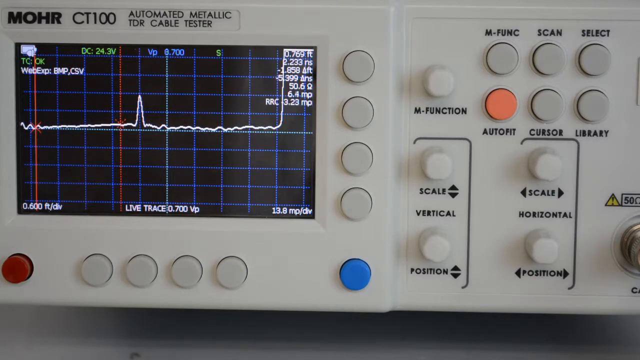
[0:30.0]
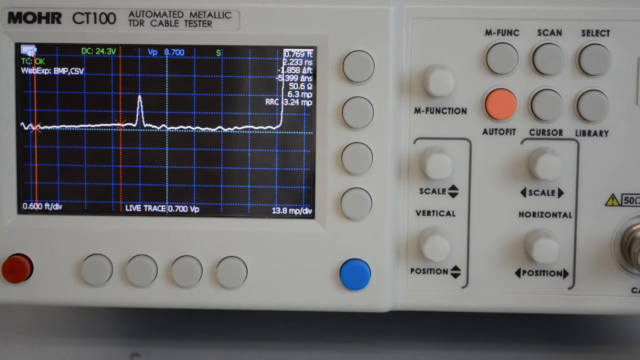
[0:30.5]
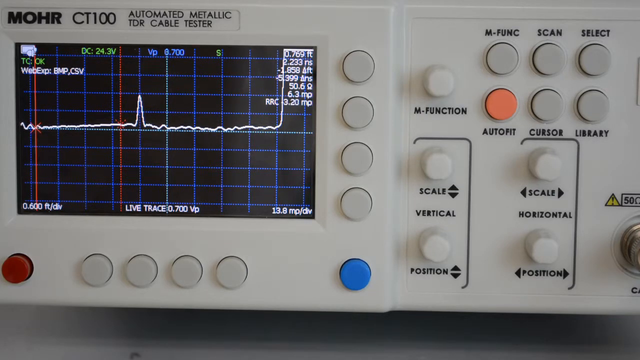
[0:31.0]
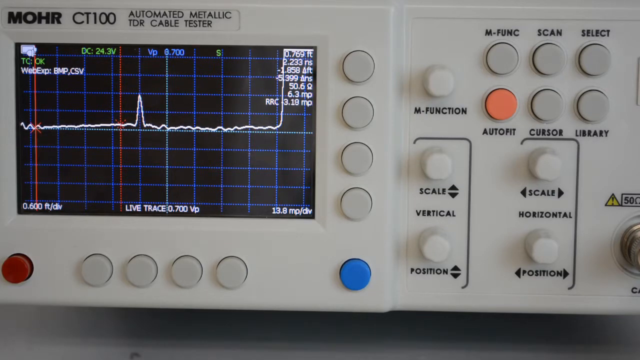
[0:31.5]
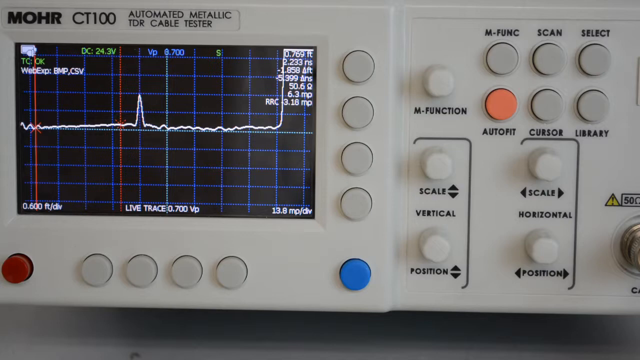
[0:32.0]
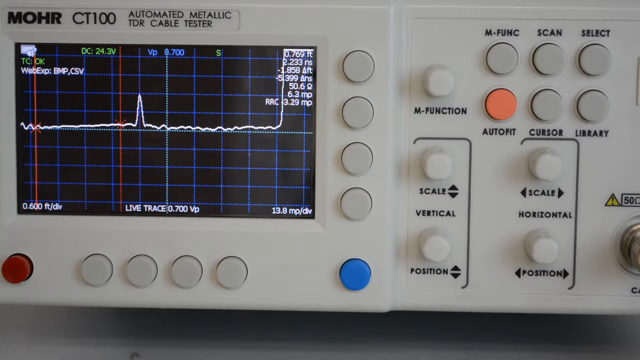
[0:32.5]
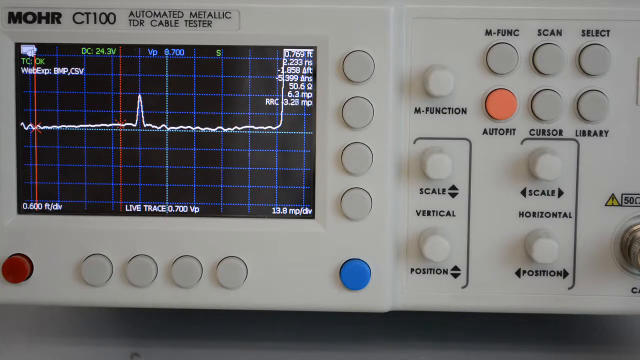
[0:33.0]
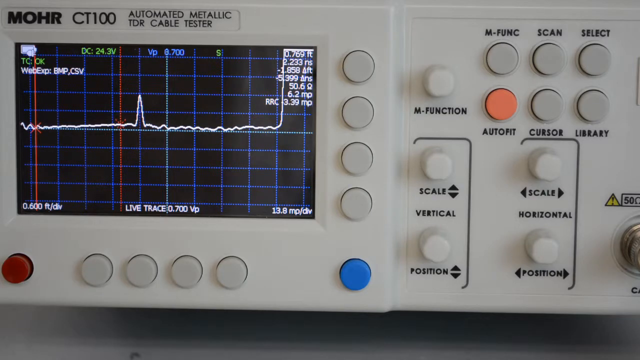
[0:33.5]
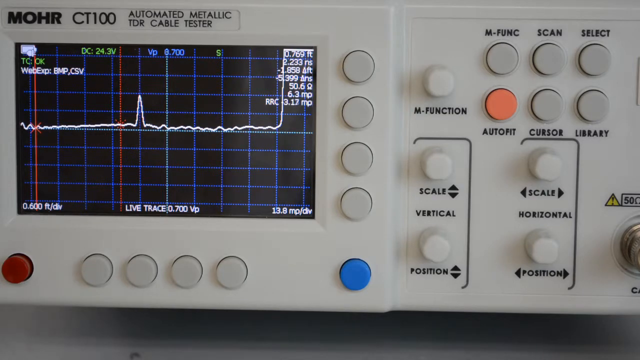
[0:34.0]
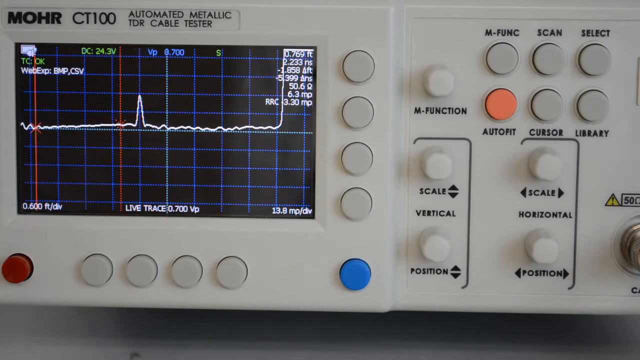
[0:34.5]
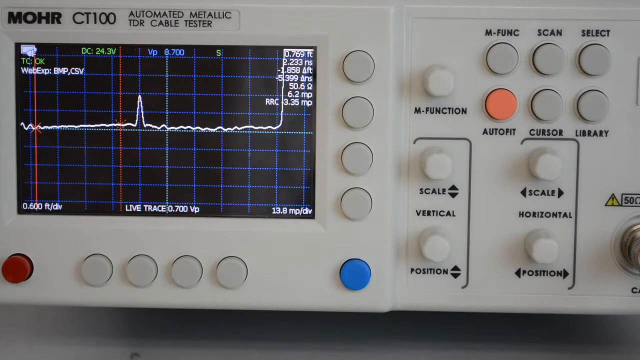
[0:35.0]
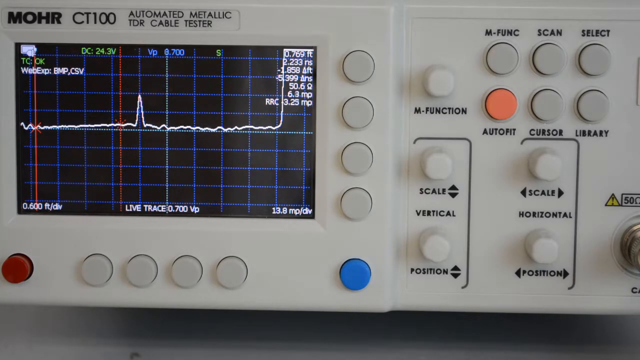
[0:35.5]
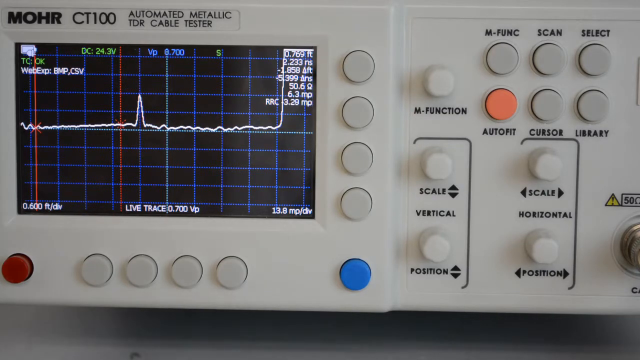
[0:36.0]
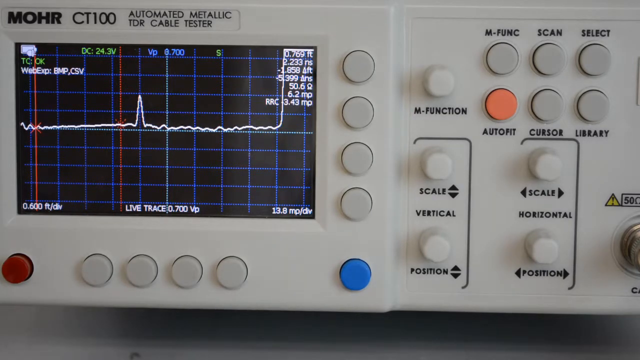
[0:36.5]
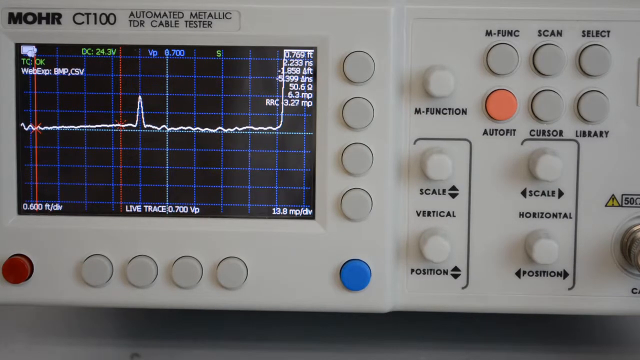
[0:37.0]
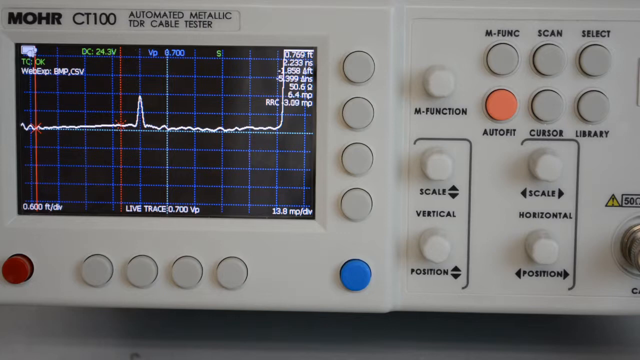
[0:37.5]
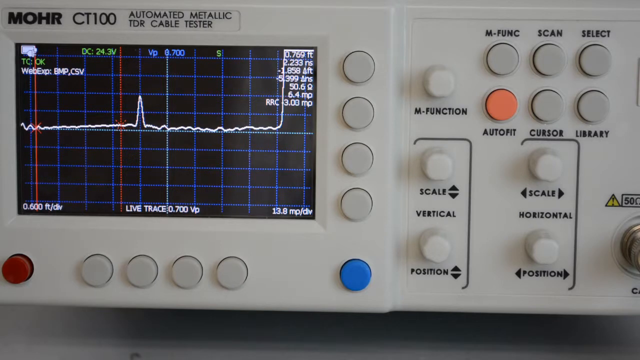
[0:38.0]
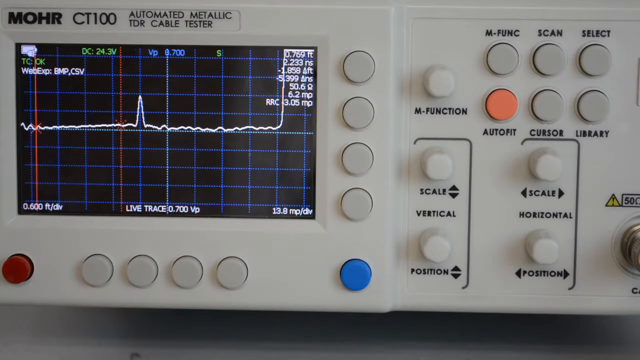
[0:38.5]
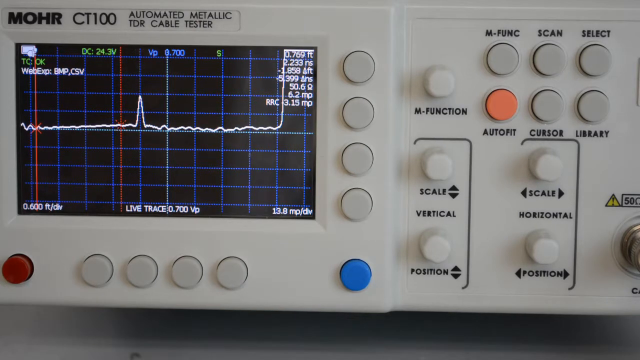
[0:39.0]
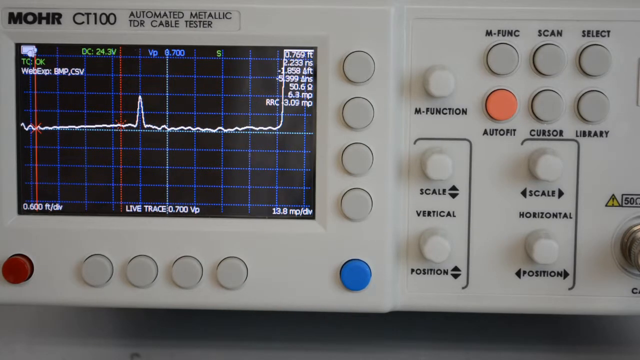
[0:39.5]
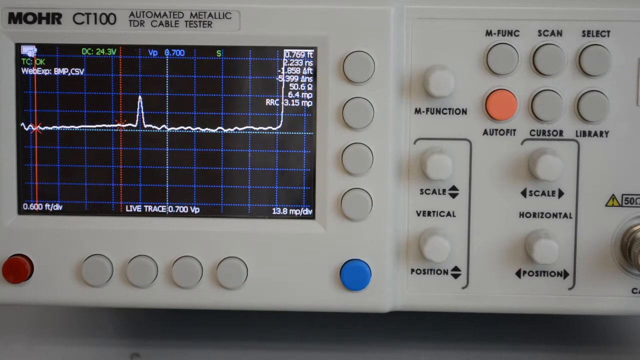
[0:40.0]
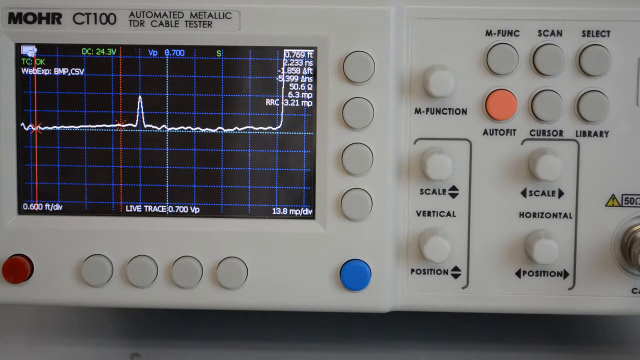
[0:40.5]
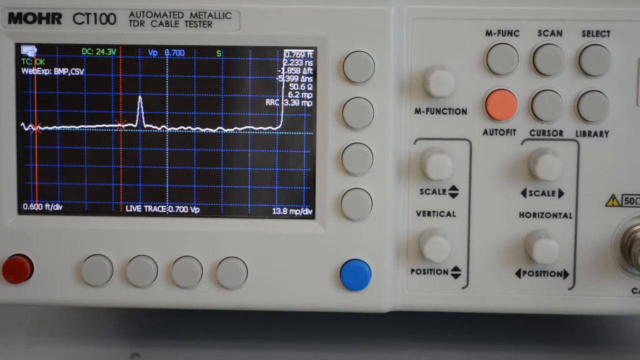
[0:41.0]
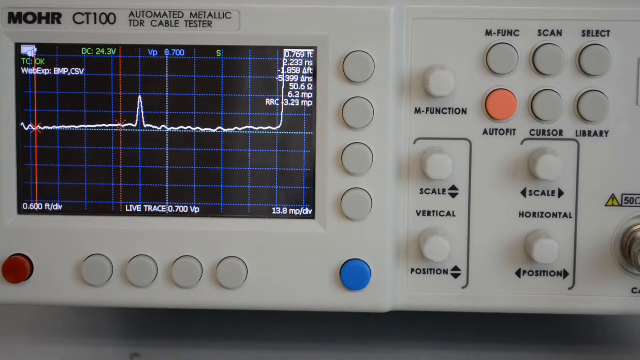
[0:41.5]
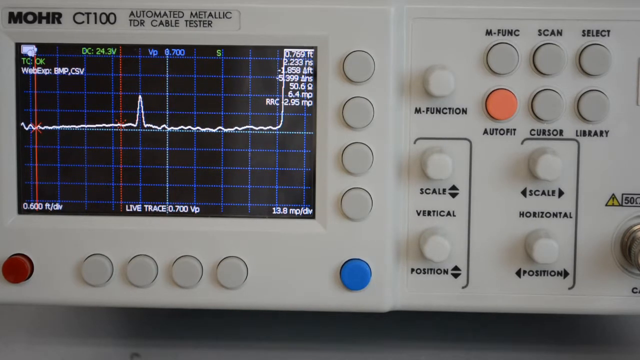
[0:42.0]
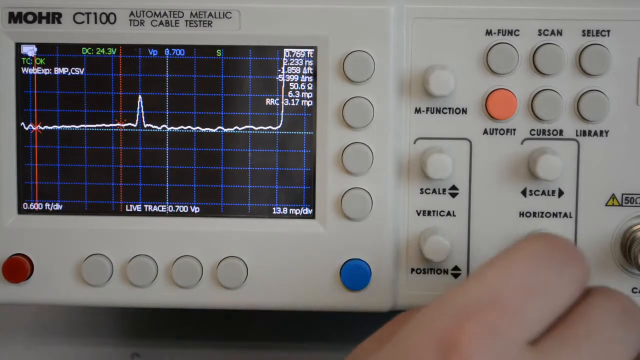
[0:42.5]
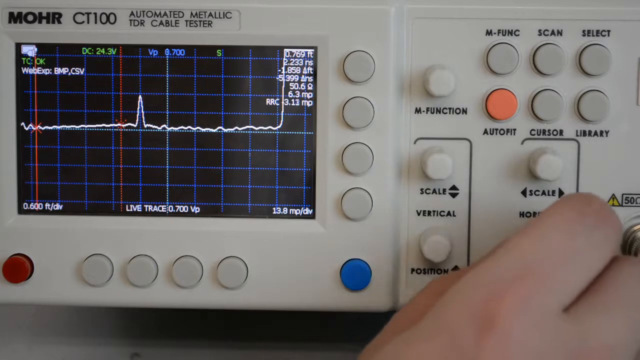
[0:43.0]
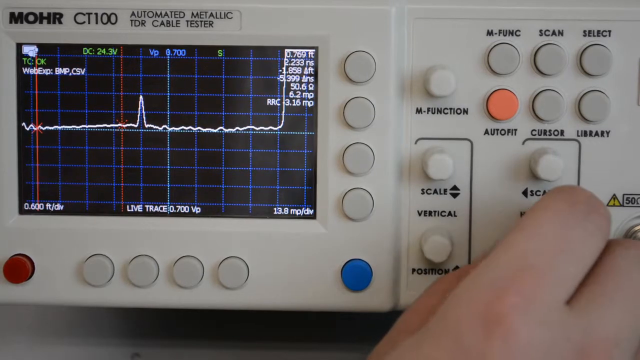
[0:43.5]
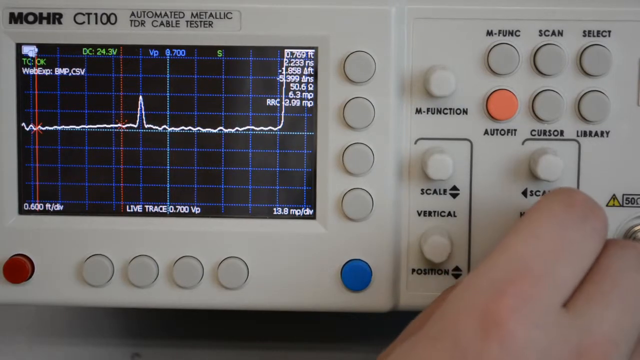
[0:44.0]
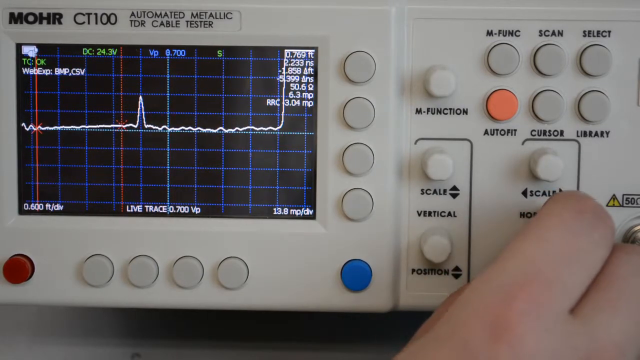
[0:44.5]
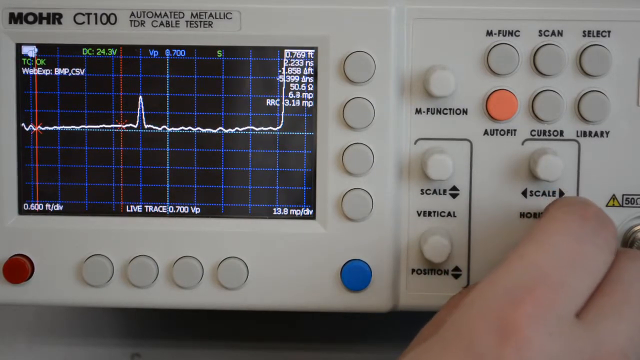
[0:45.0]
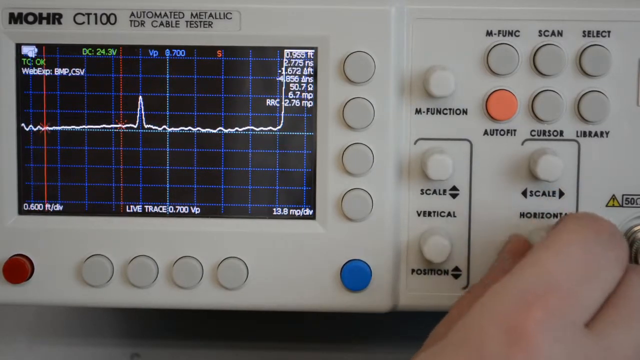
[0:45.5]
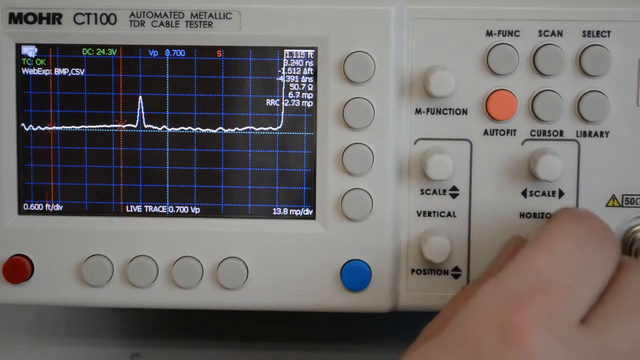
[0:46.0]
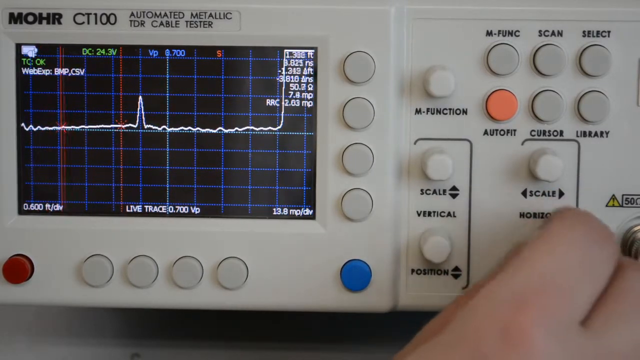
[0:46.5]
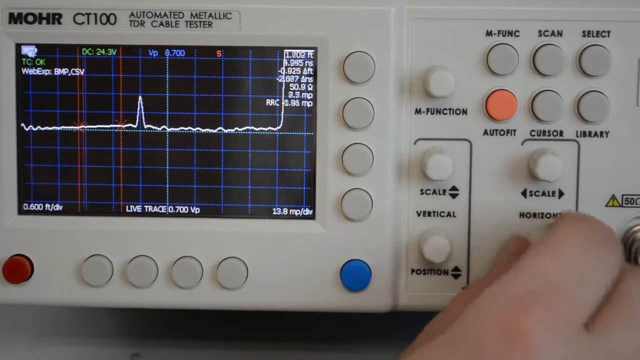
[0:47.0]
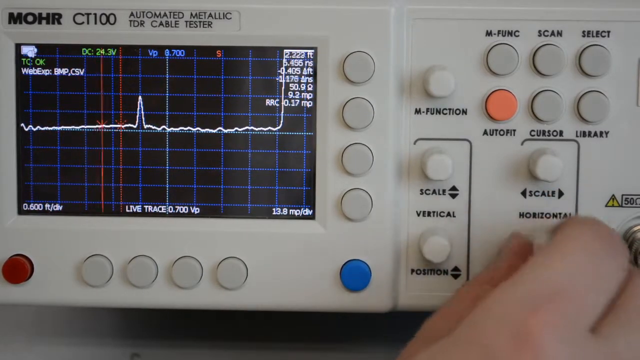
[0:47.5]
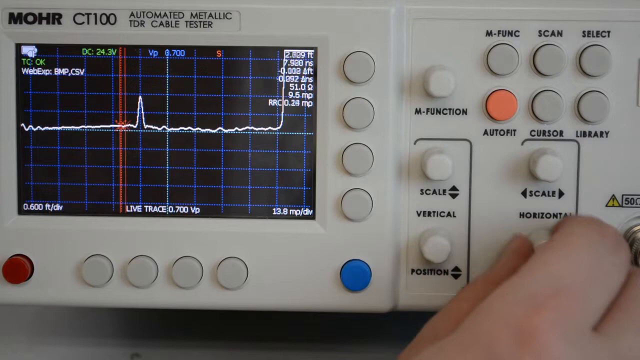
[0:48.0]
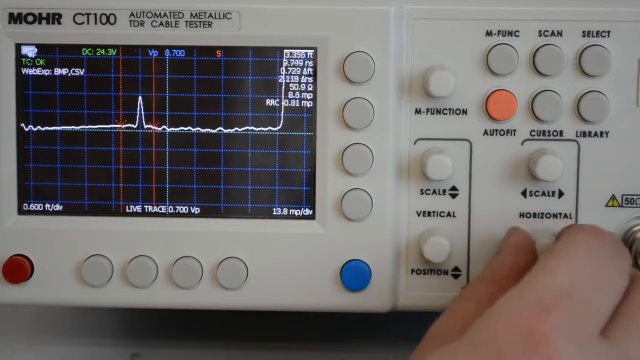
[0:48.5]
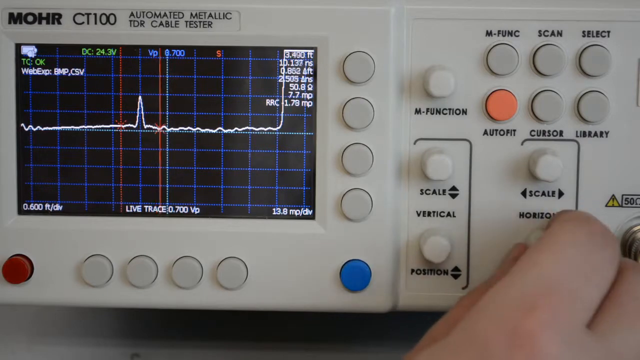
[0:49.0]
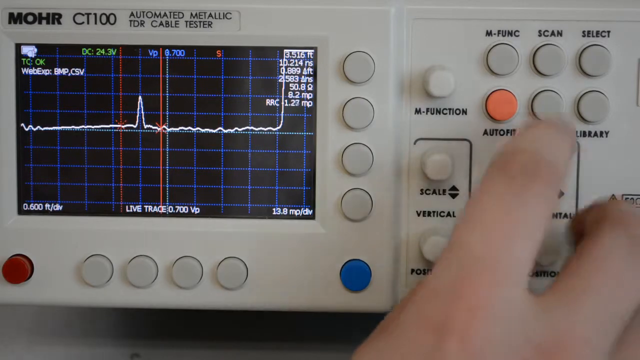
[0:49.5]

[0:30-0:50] The camera remains on the close-up of the machine. The numbers on the device's screen continue to cycle and fluctuate as some sort of test apparently runs. A wavy line appears on the screen, which has a black background with blue grid marks and two vertical red lines on the left side. After several seconds of testing, a hand comes in from the bottom right corner and goes up to one of the knobs, the position knob. The thumb and index finger turn the knob clockwise, moving the red vertical line that was closest to the left over to the right, near the center. The hand then moves away from the knob, goes up to the top section of the device and clicks the cursor button before moving back down and out.